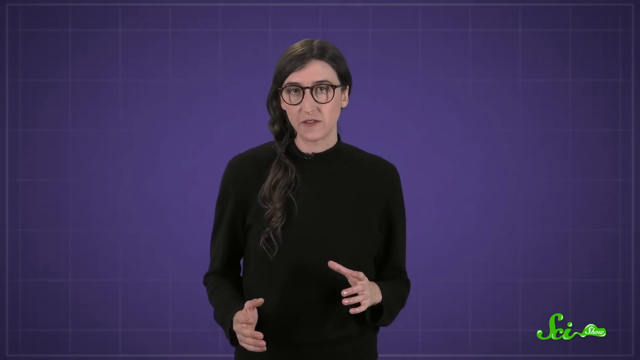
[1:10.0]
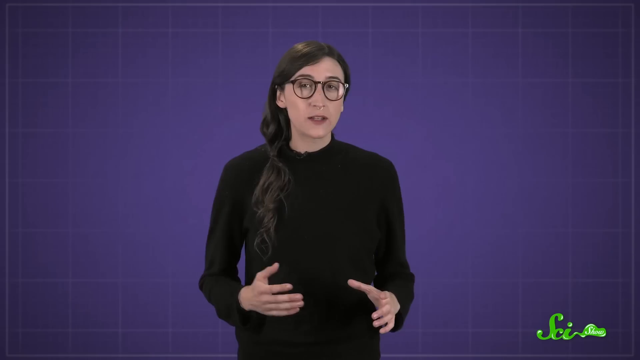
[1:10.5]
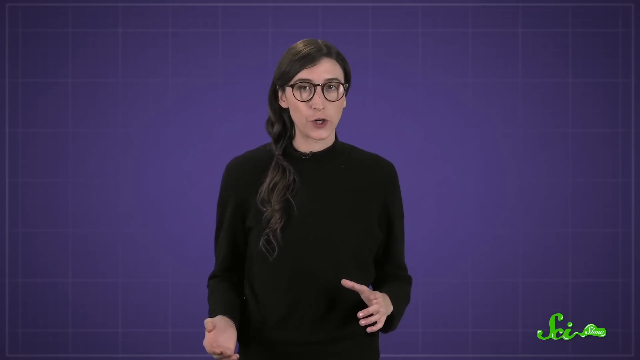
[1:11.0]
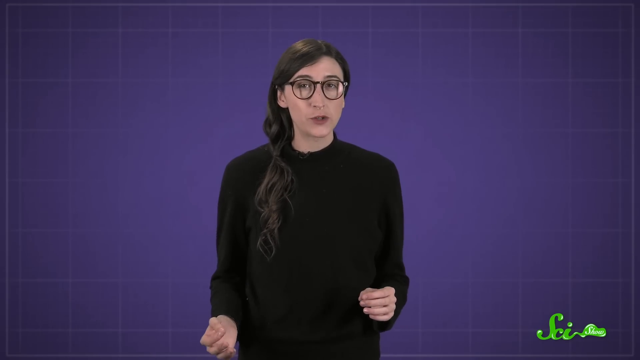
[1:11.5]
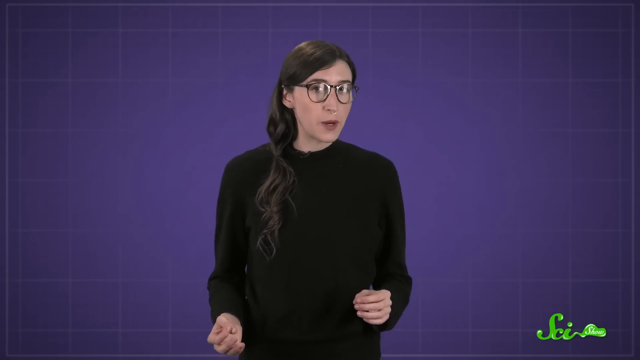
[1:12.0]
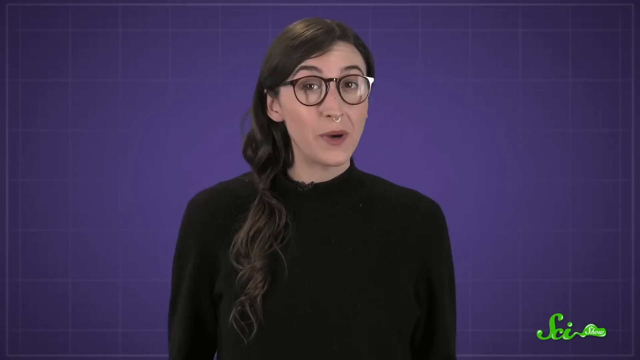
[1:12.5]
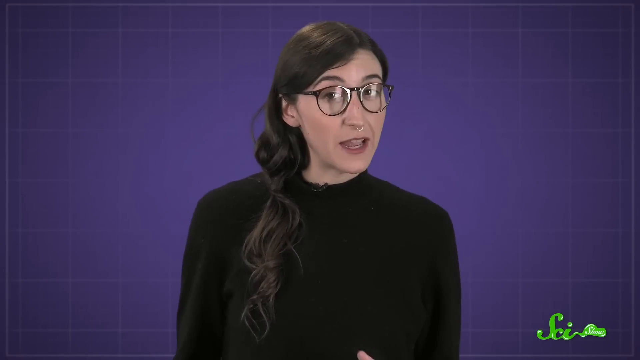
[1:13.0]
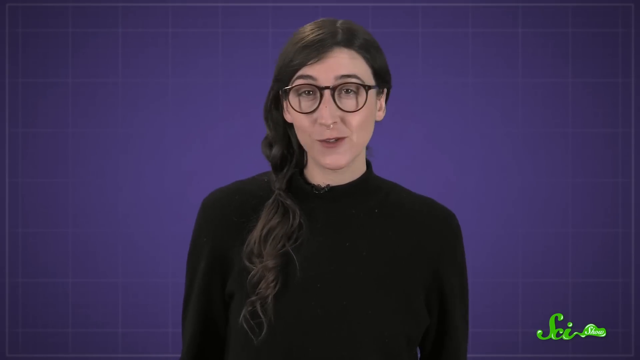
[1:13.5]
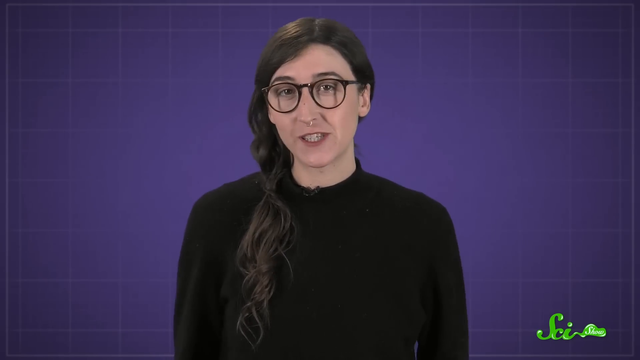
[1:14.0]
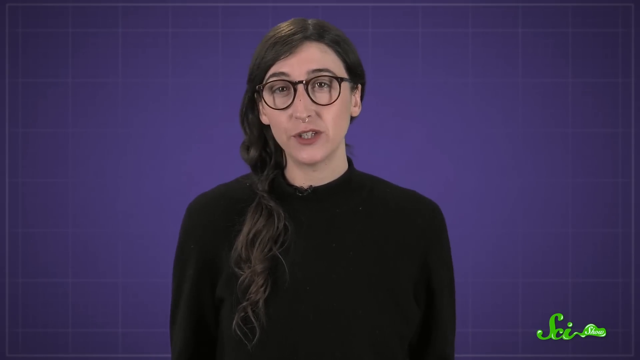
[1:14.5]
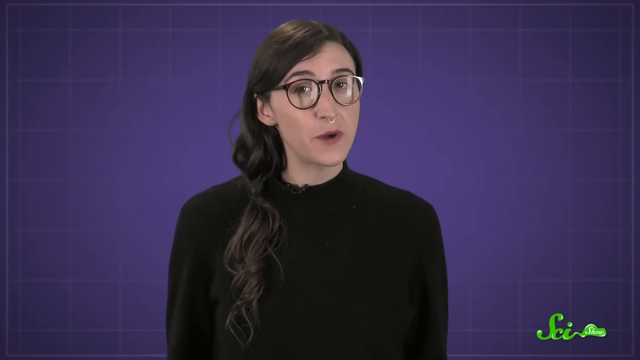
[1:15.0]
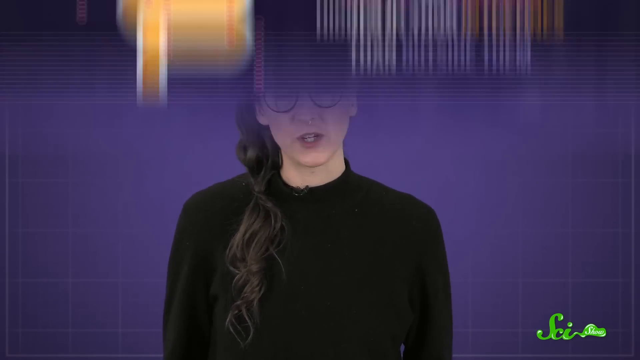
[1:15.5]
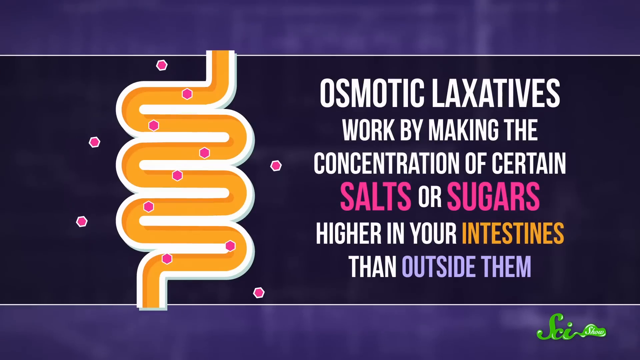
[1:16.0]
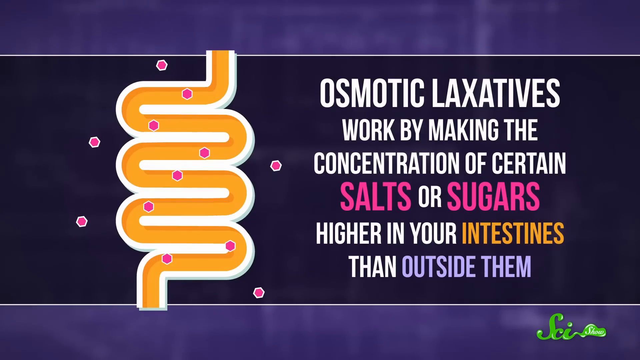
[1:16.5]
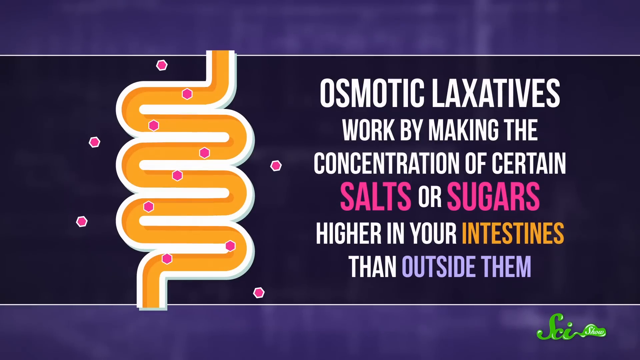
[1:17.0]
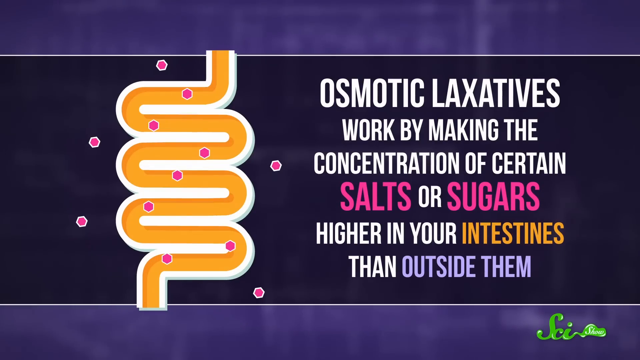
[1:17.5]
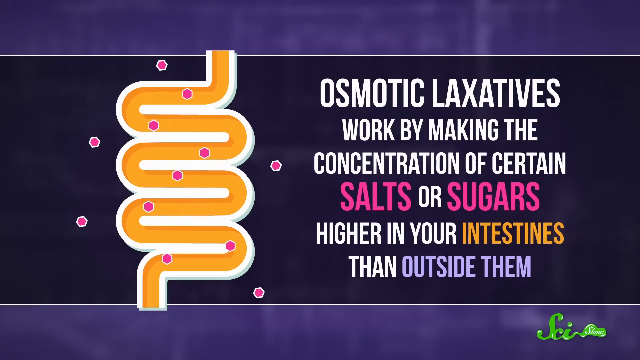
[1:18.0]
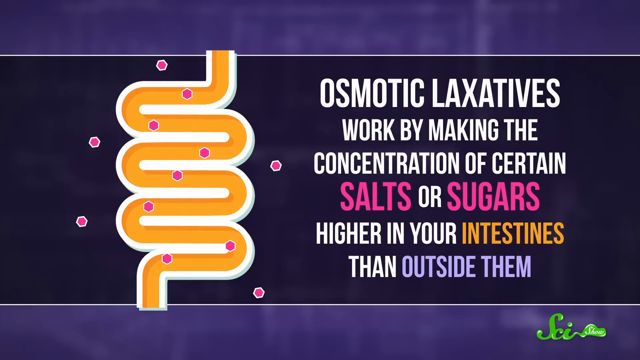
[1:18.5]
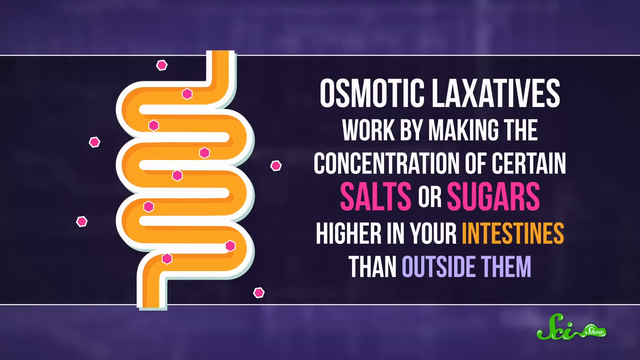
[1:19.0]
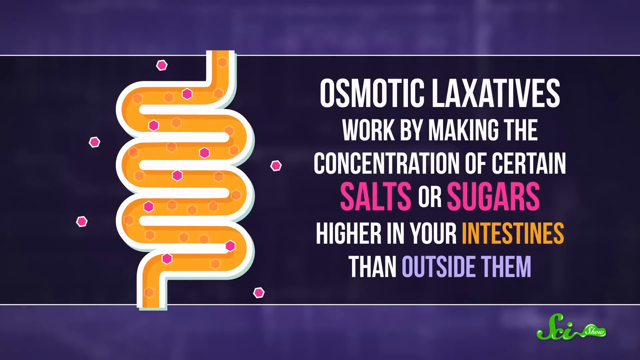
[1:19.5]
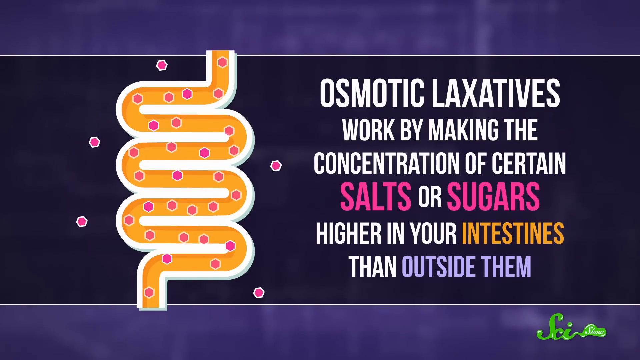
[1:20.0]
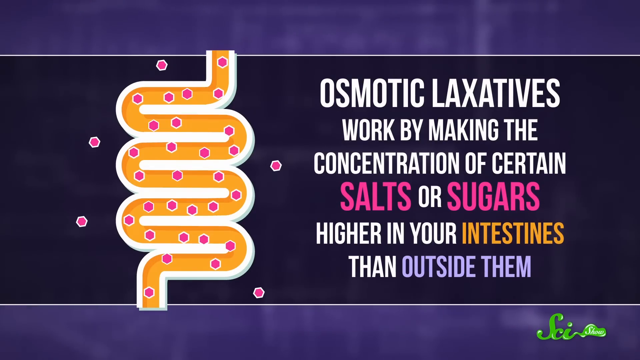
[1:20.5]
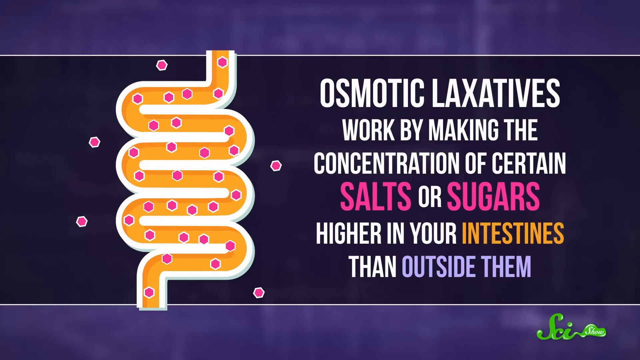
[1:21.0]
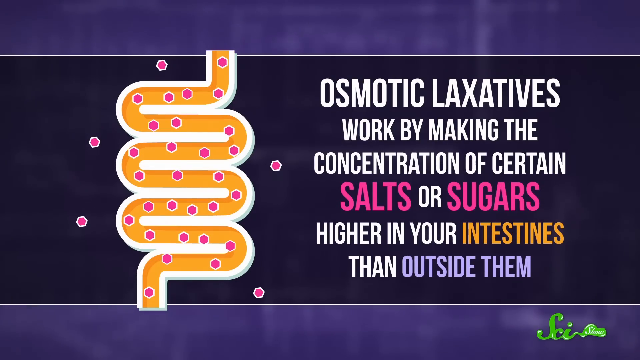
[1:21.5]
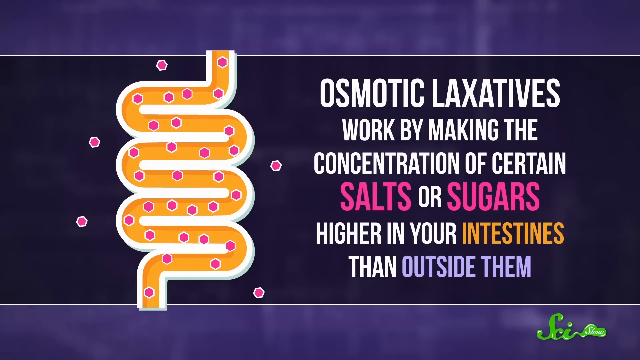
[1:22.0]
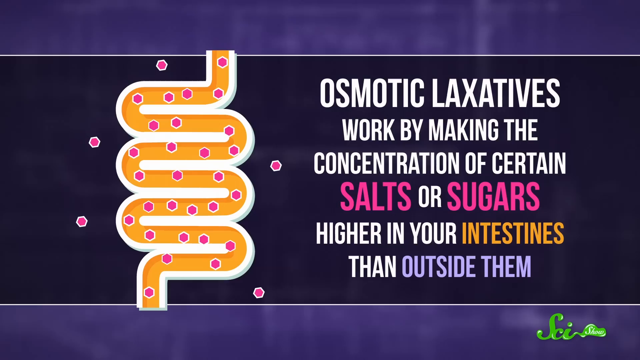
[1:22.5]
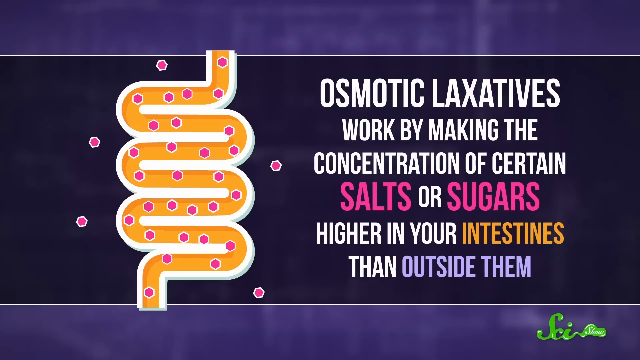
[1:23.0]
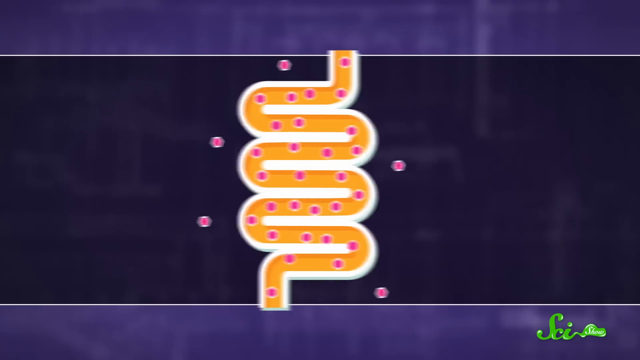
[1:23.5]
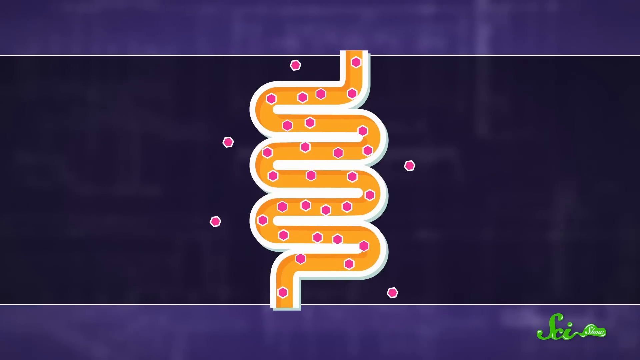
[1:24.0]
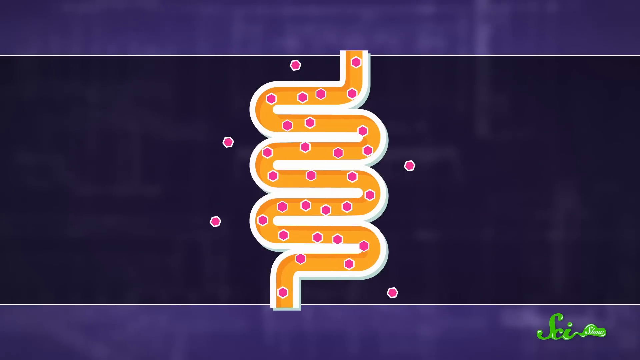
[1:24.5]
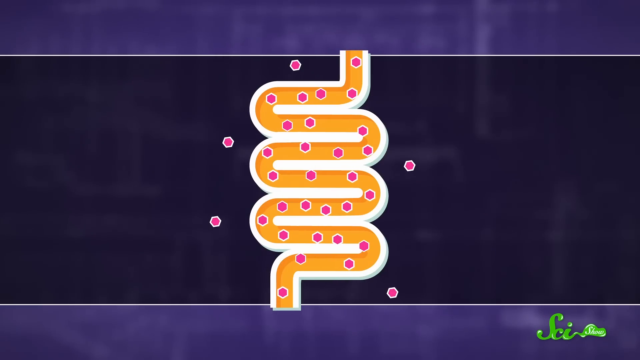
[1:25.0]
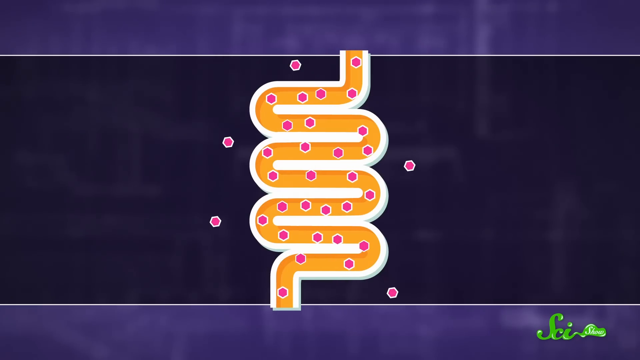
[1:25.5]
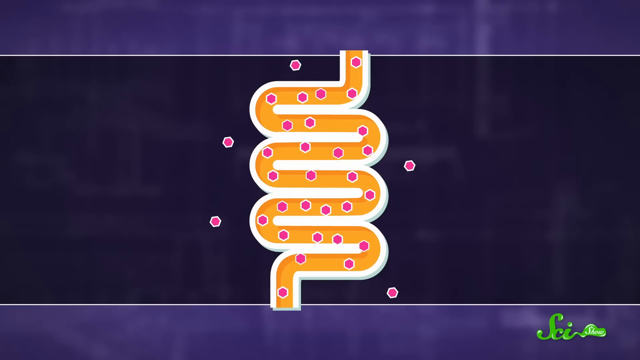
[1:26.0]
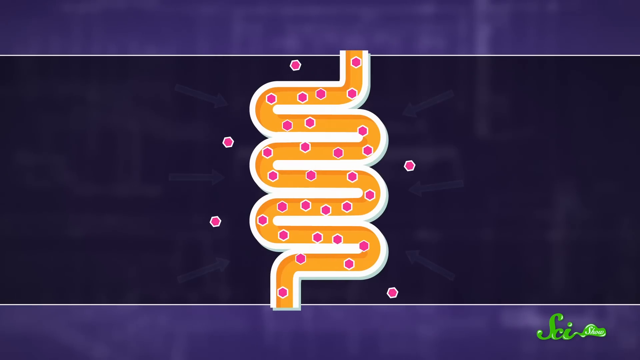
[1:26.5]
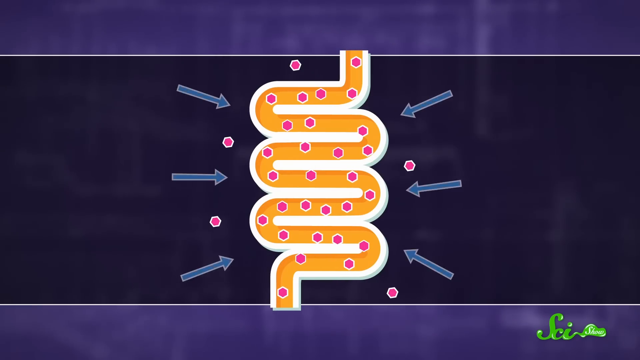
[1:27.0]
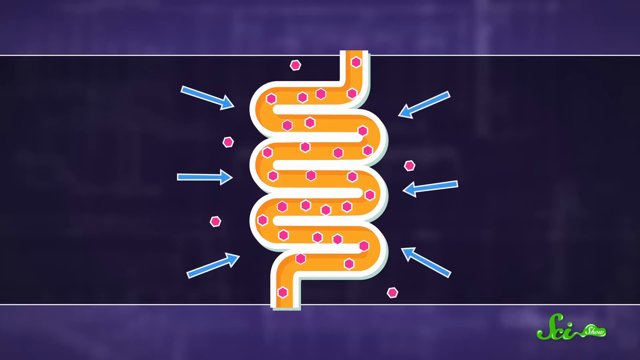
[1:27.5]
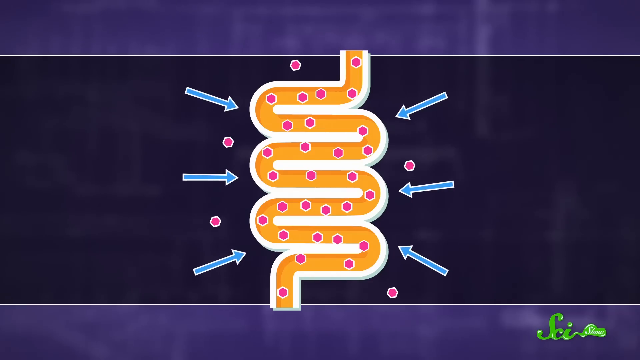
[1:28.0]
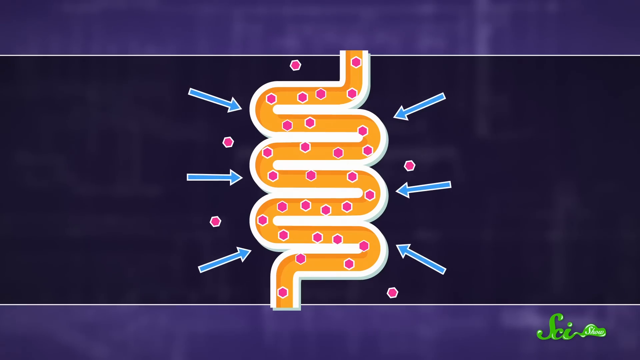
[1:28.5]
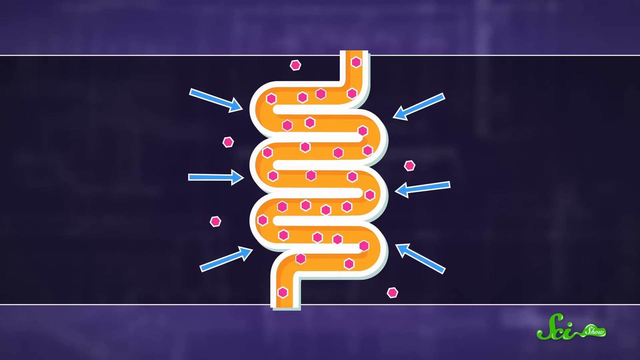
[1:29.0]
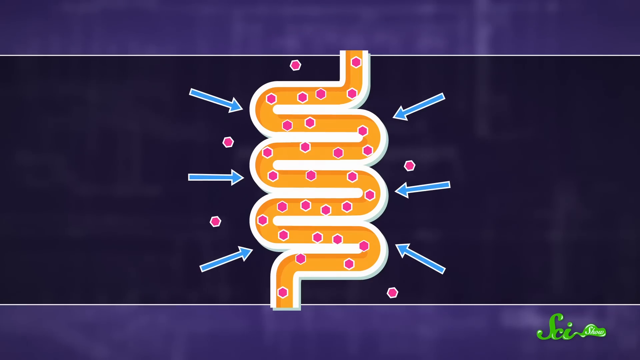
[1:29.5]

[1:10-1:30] The woman speaks again, standing in front of what looks like a purple backdrop; she has long dark brown hair and a black sweater. On-screen text reads "osmotic laxatives work by making the concentration of certain salts or sugars higher in your intestines than outside them." On the left side of the screen is something orange that looks almost like a drain, going down. What look like little magenta dots go down it, and then all the dots are inside it, in what appears to represent the intestines.